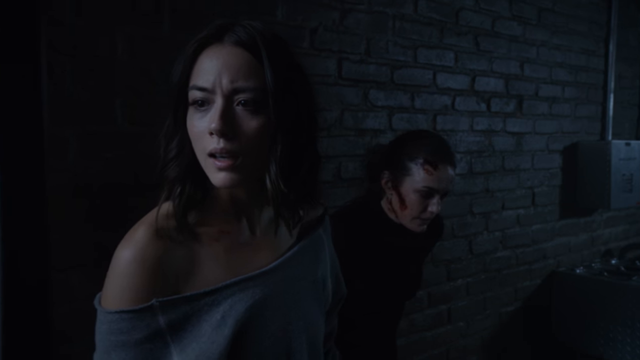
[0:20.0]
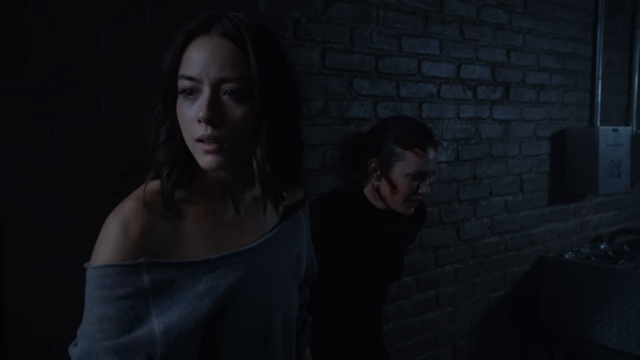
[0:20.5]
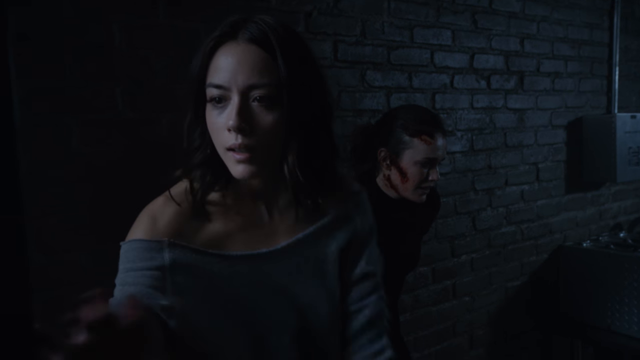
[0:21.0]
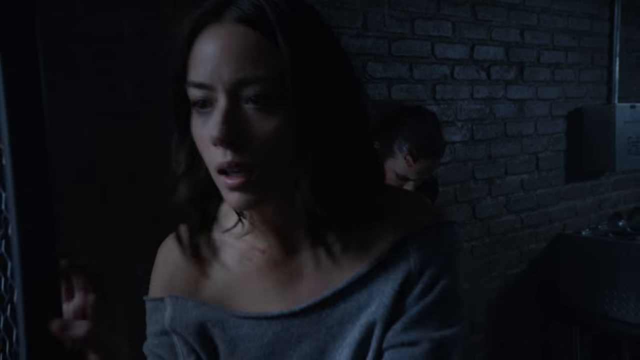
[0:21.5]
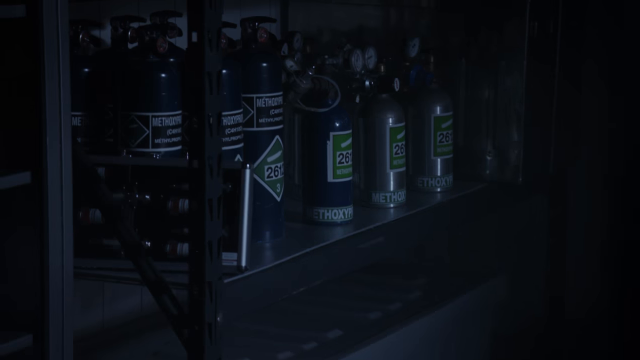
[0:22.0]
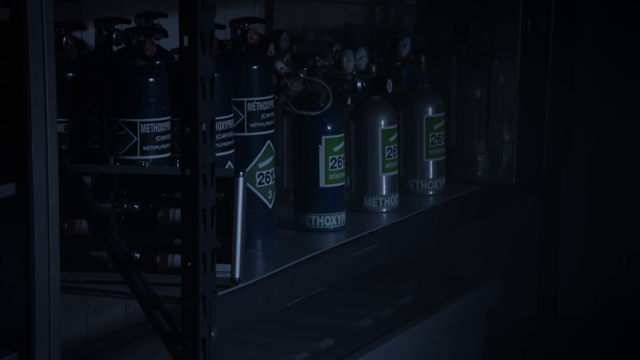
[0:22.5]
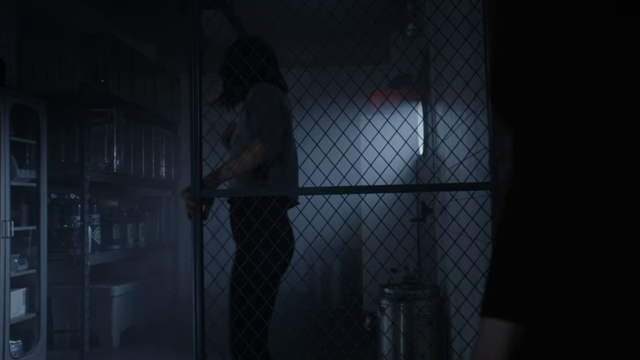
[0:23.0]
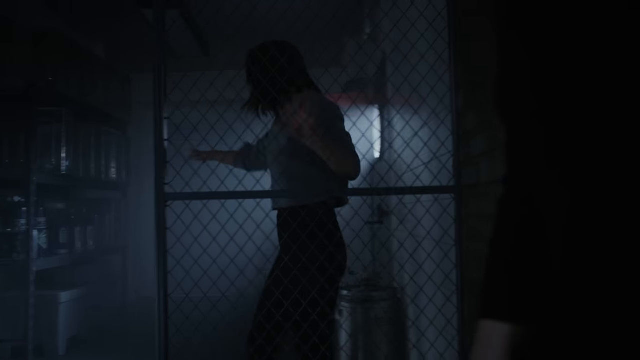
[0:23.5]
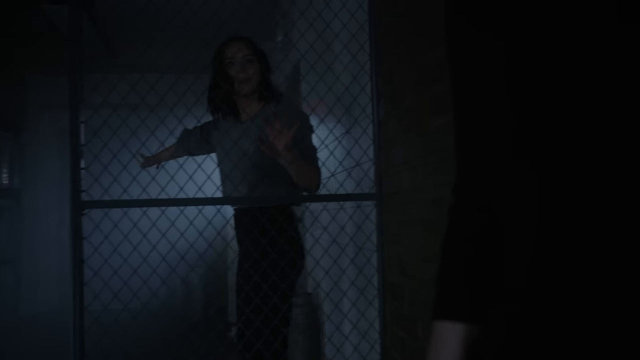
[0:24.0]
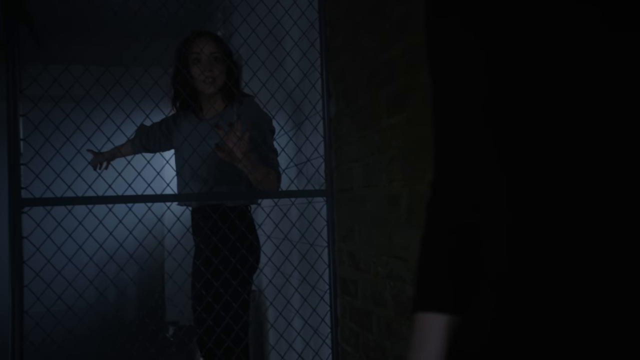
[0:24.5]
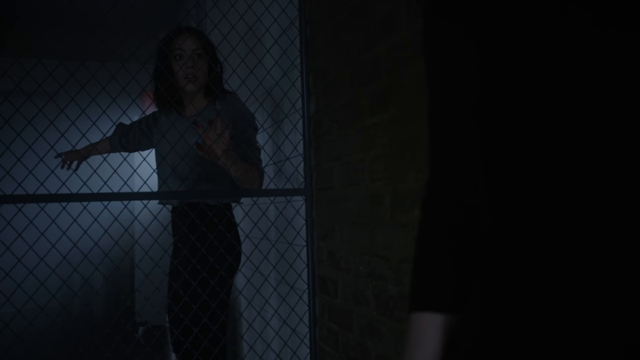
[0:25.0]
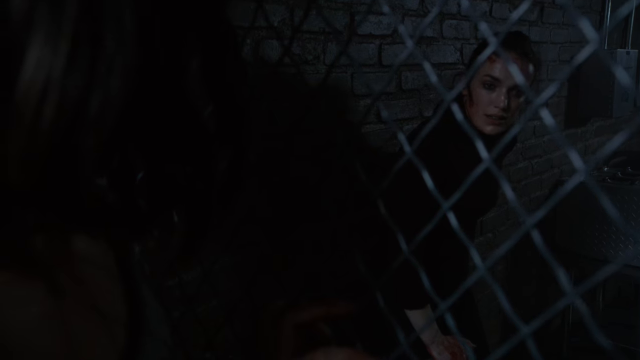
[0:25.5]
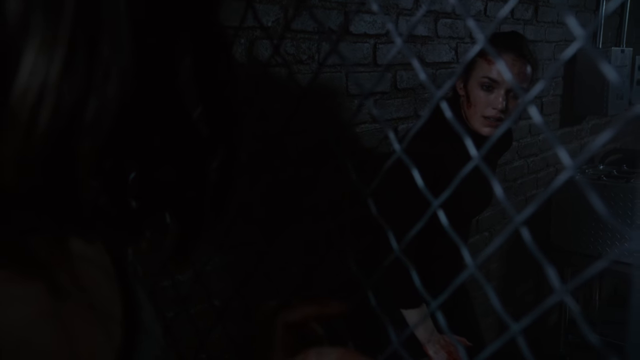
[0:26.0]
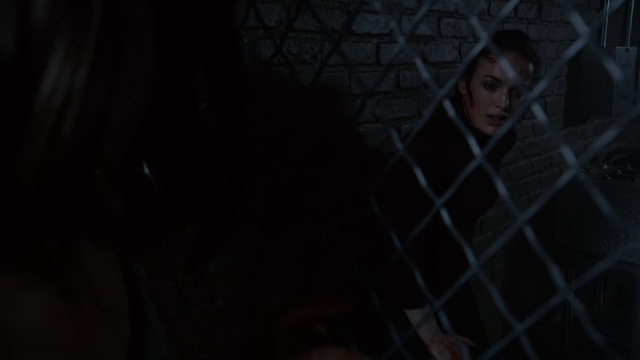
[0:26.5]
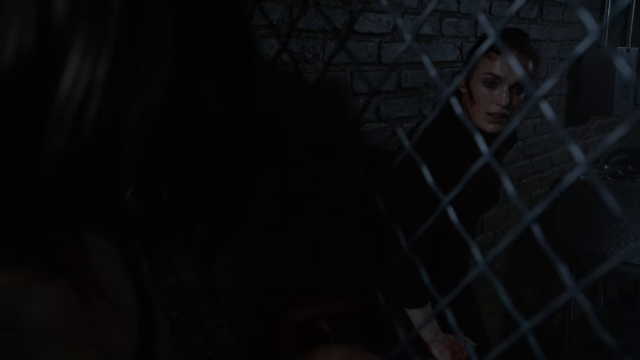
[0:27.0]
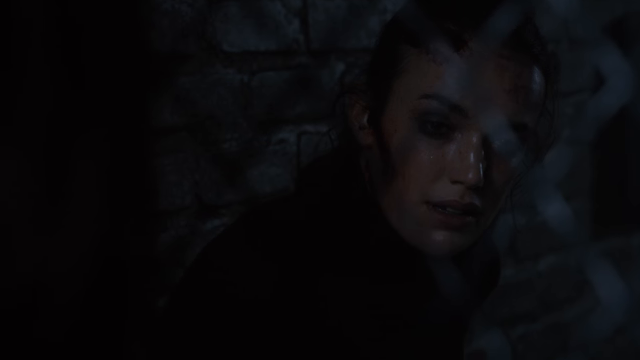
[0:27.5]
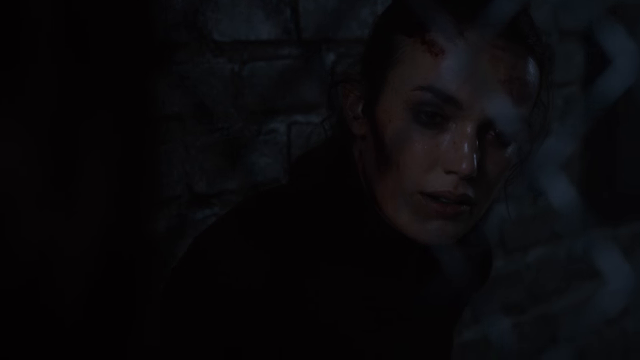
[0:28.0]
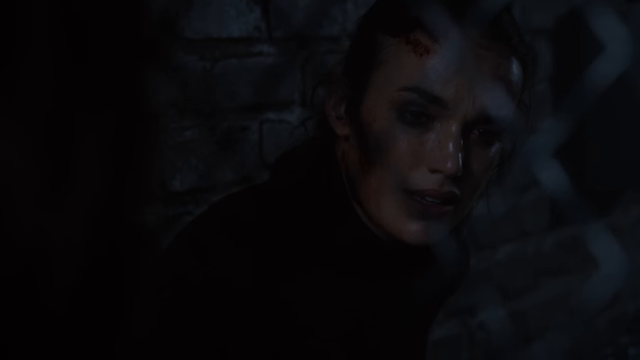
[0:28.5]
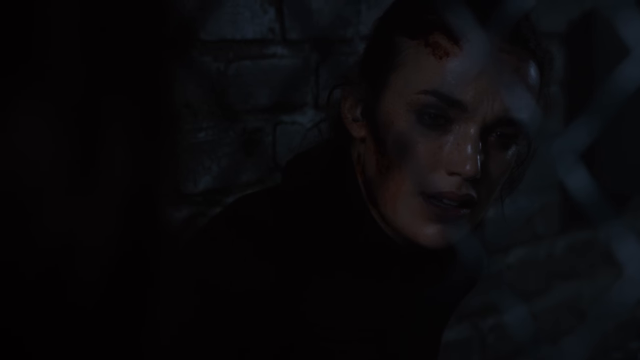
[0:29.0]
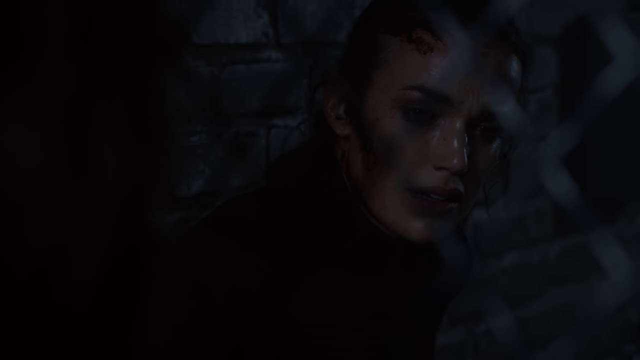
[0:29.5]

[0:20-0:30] The dark-haired woman in the light blue top hanging off her shoulder is still talking with the other woman. She turns and looks through the chain-link fence into what looks like a storage area, possibly with shelving, holding small royal blue bottles about the size of an oxygen tank or fire extinguisher, apparently marked with the number 26. She stares at them, then turns around and says something to the woman with the burns on her face, who is kind of looking down and responds solemnly. The woman with the burns has dark hair; what almost looks like a sideburn on her face is apparently a long burn. She is sitting on a bench against the brick wall, while the other woman is standing.